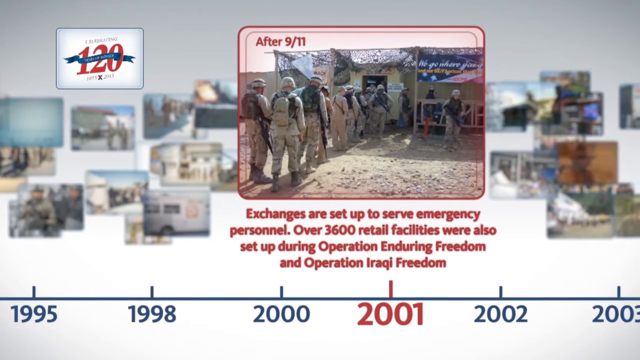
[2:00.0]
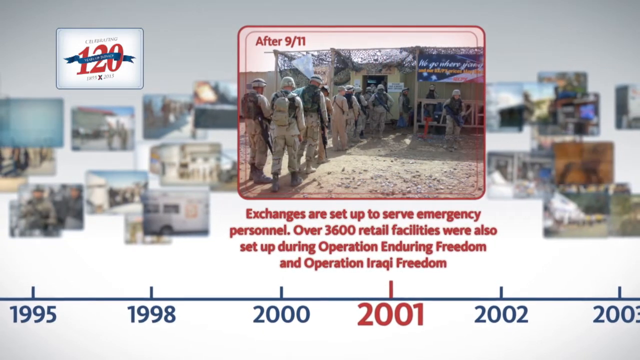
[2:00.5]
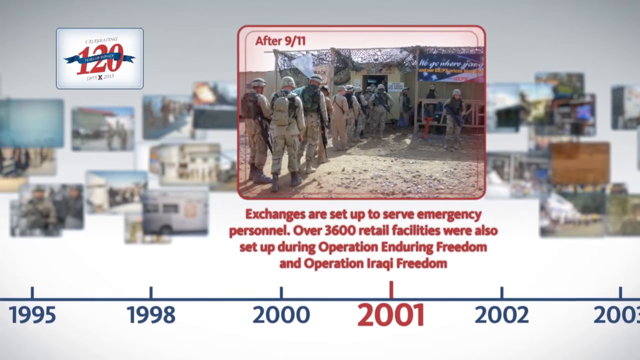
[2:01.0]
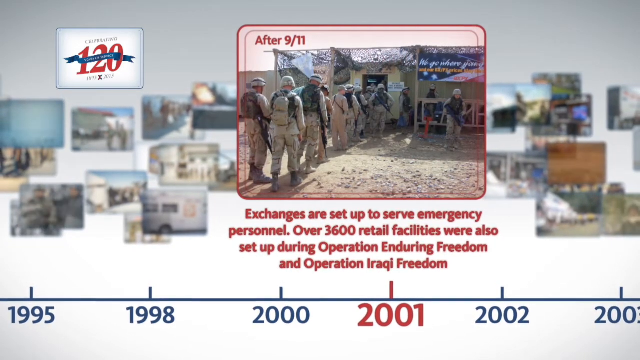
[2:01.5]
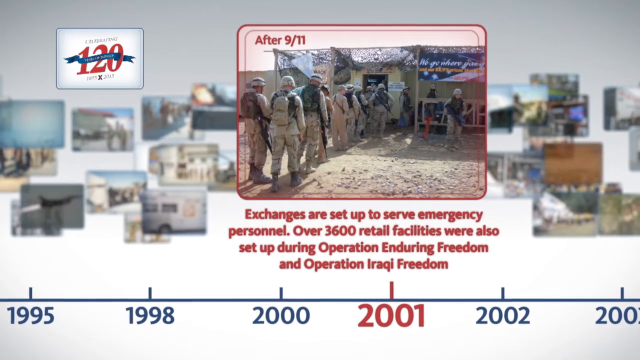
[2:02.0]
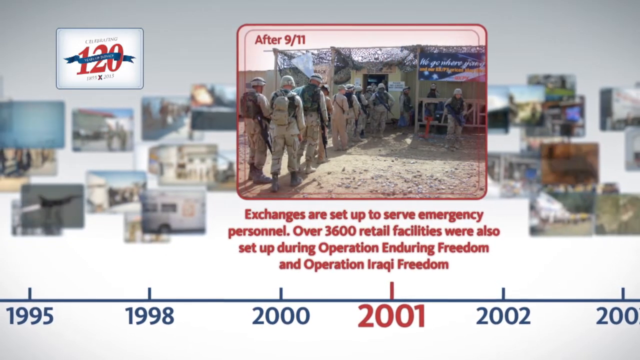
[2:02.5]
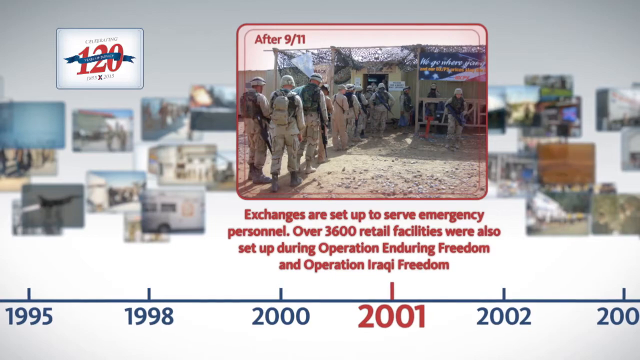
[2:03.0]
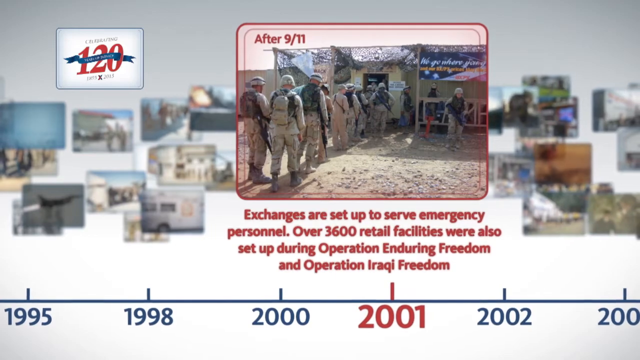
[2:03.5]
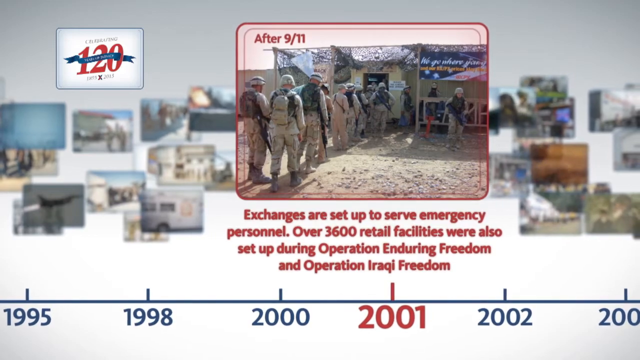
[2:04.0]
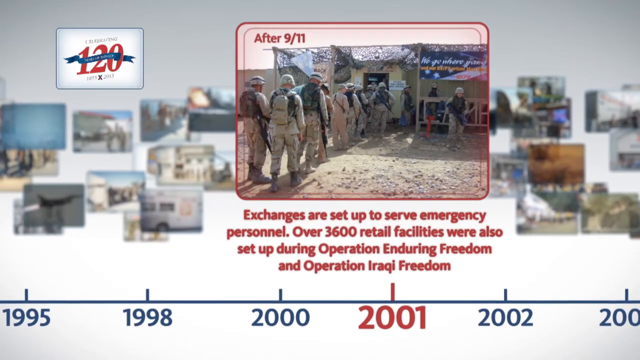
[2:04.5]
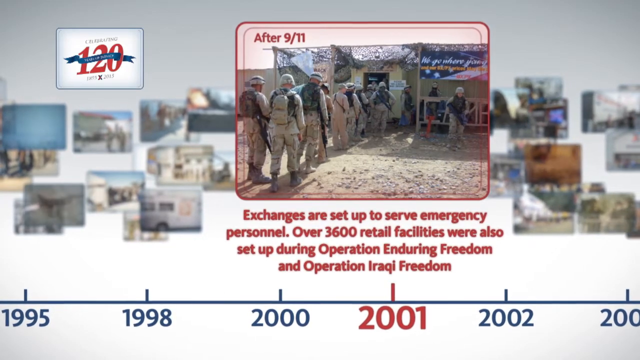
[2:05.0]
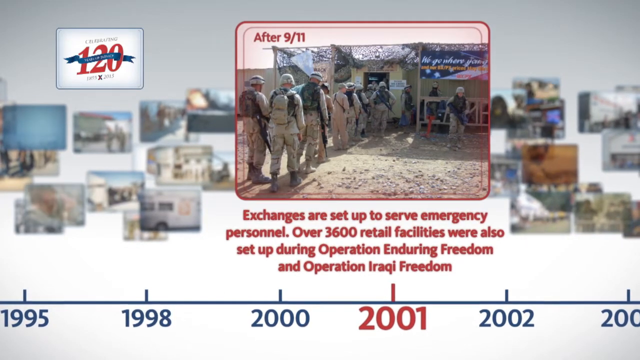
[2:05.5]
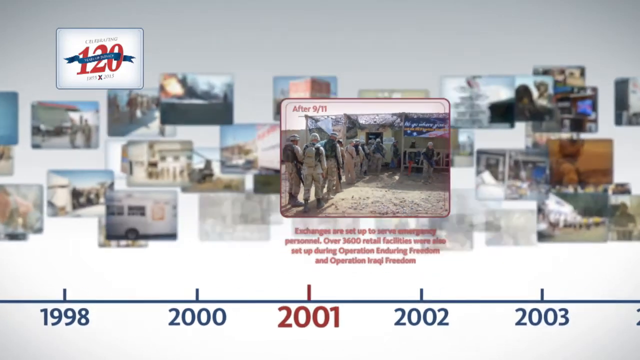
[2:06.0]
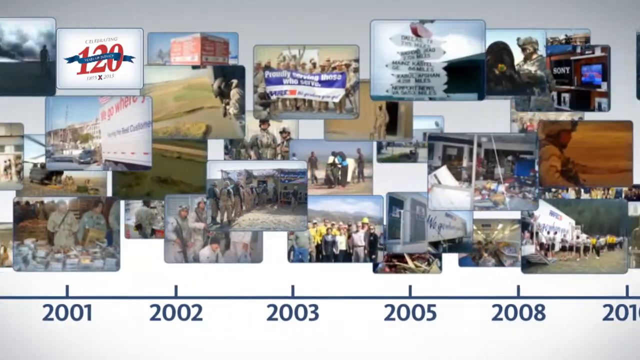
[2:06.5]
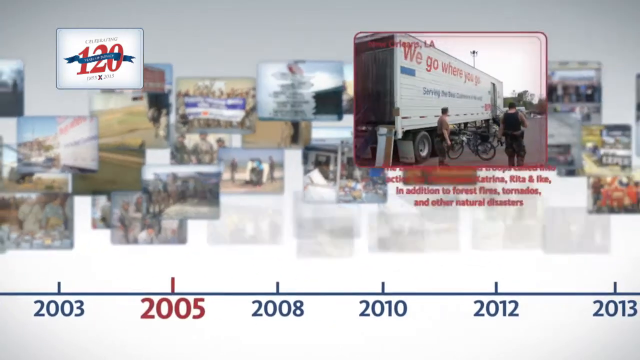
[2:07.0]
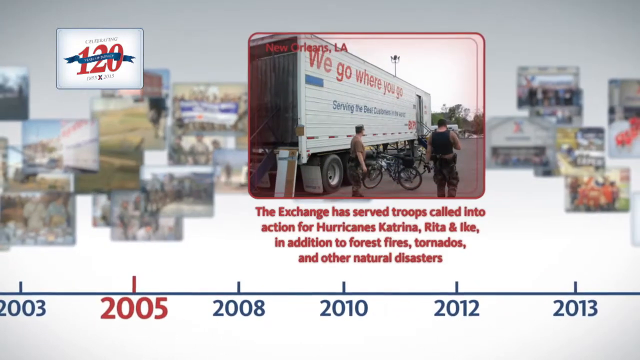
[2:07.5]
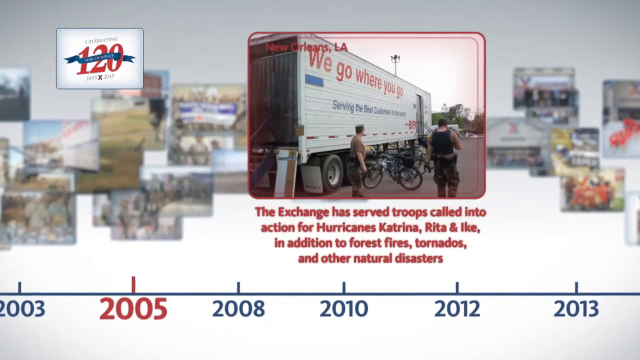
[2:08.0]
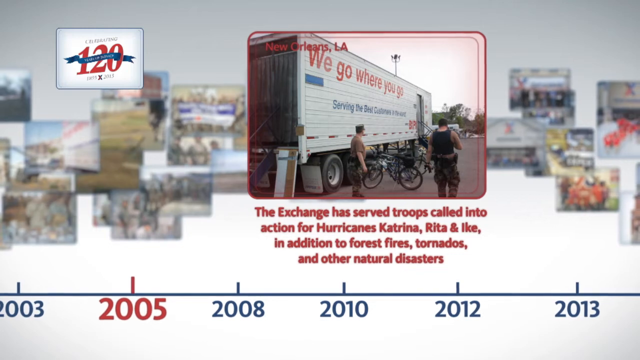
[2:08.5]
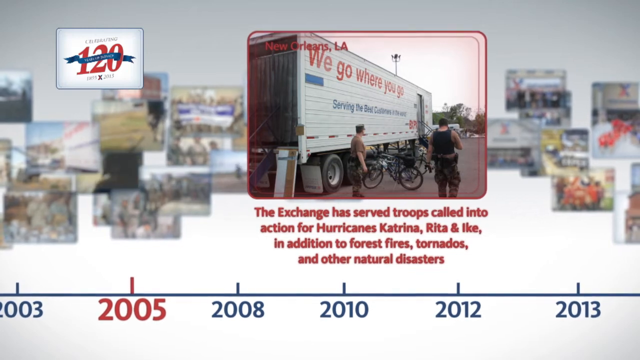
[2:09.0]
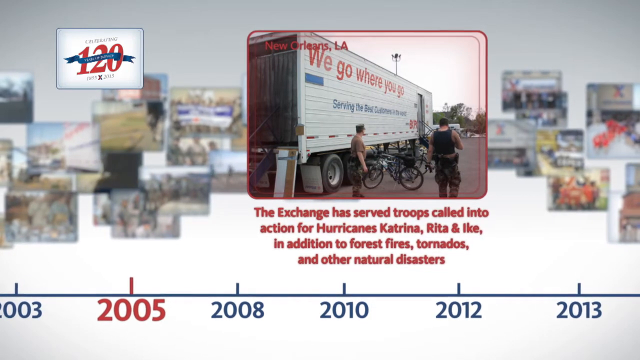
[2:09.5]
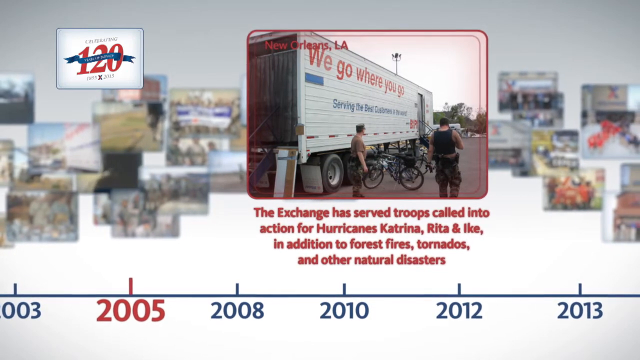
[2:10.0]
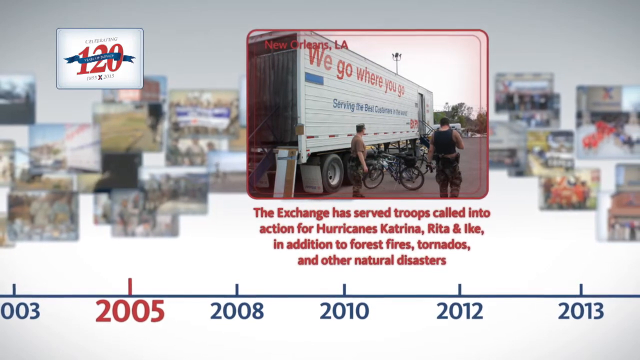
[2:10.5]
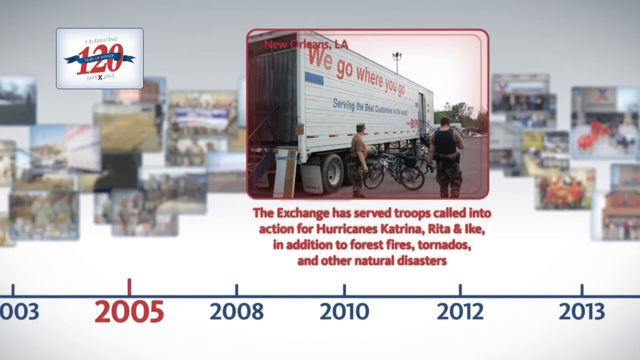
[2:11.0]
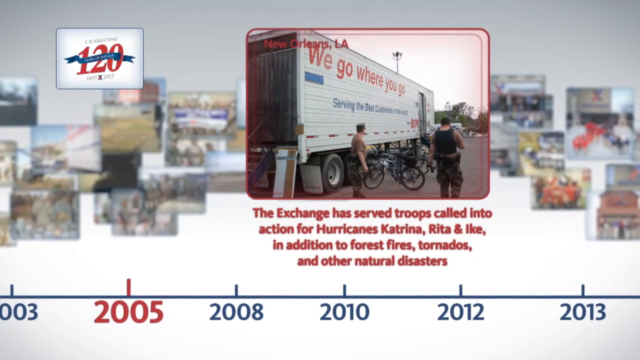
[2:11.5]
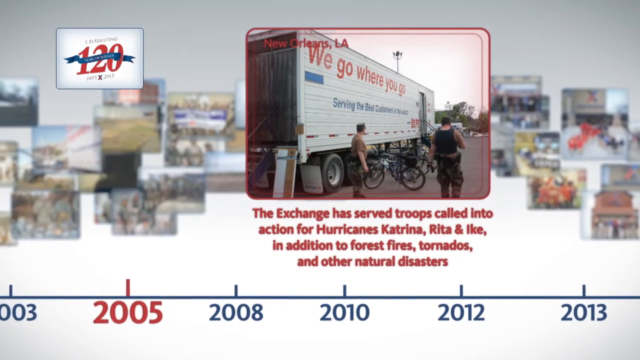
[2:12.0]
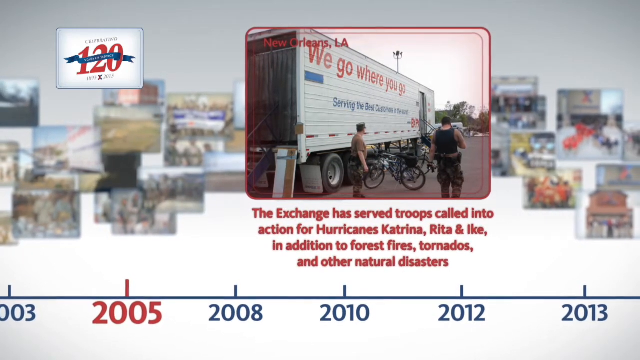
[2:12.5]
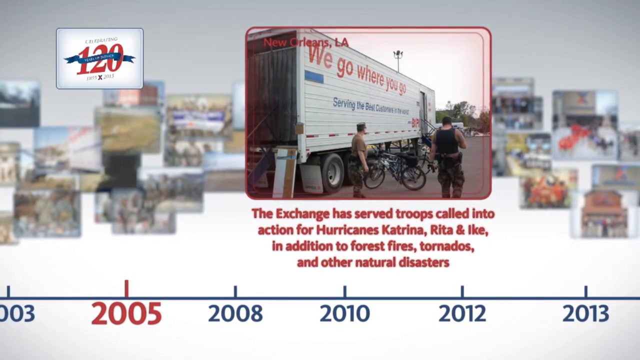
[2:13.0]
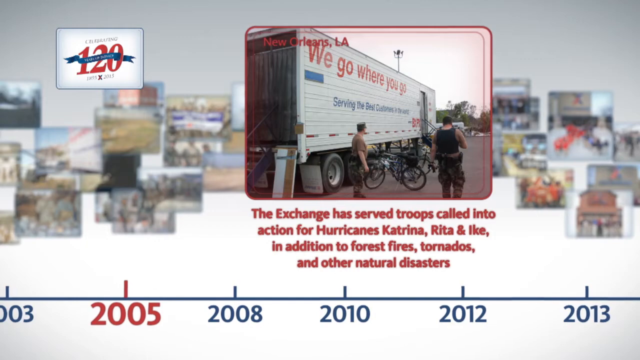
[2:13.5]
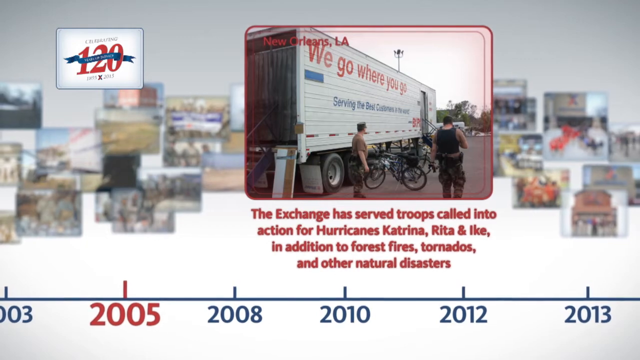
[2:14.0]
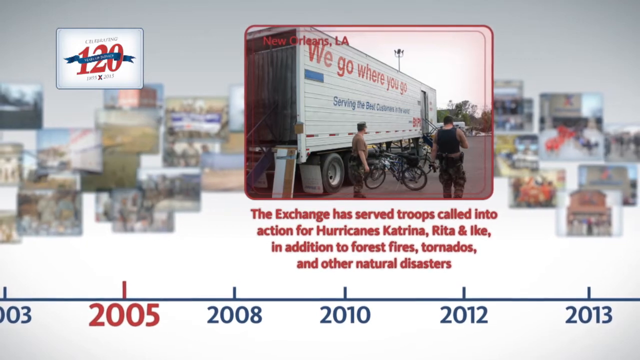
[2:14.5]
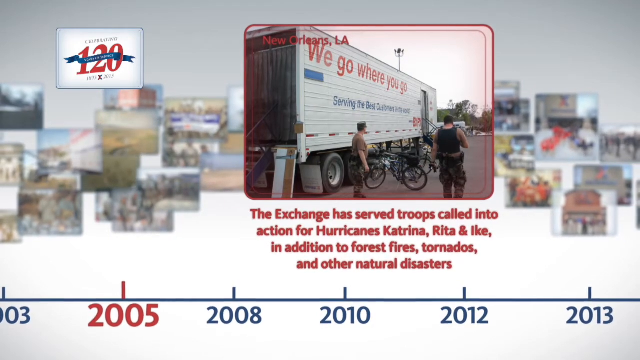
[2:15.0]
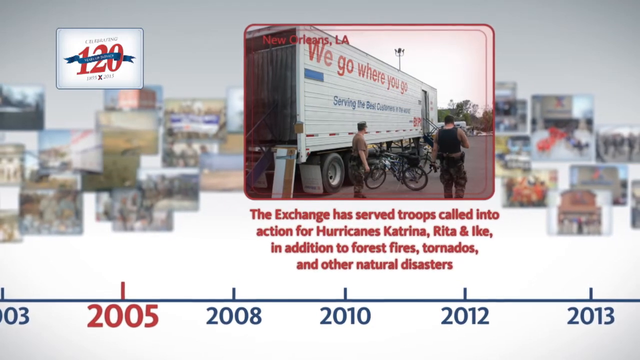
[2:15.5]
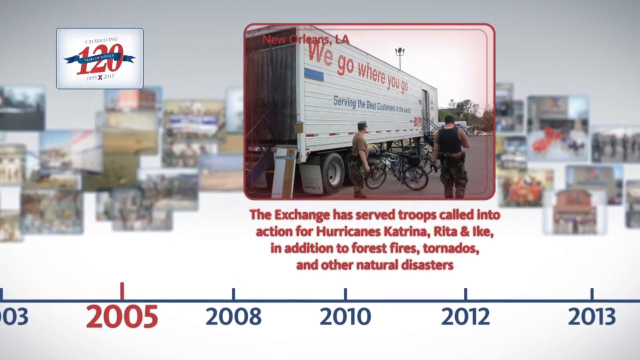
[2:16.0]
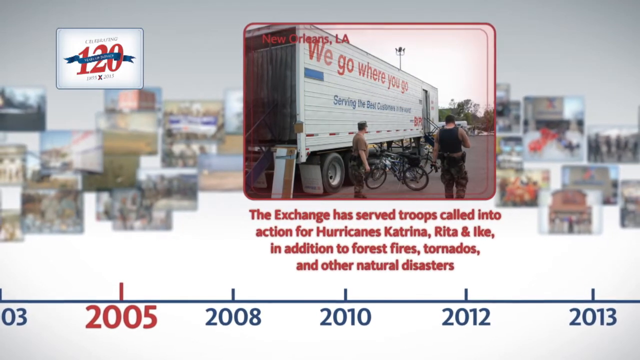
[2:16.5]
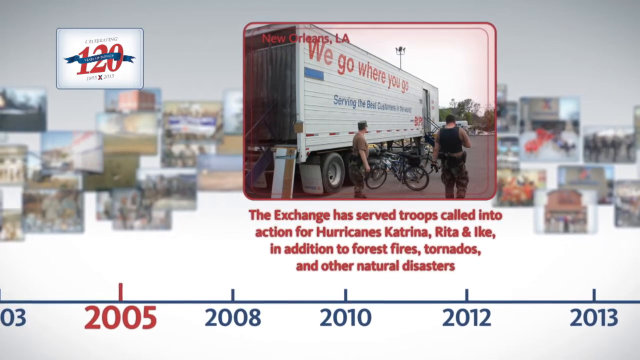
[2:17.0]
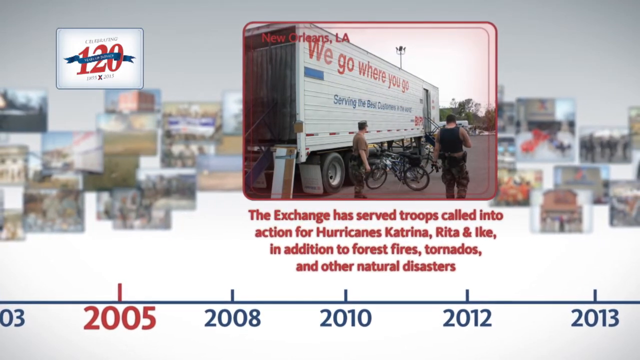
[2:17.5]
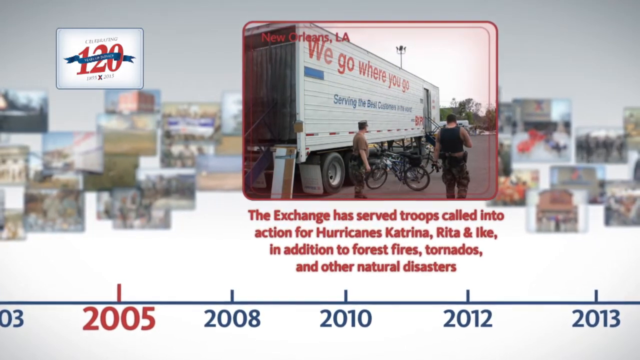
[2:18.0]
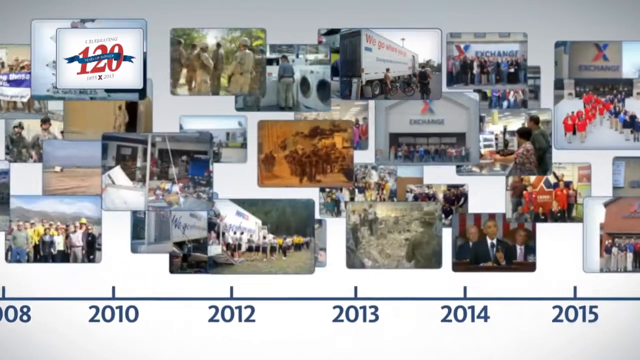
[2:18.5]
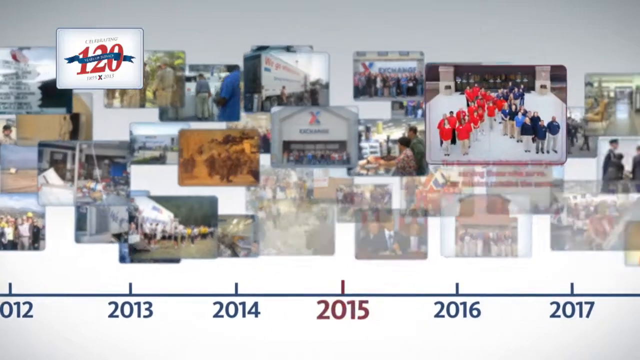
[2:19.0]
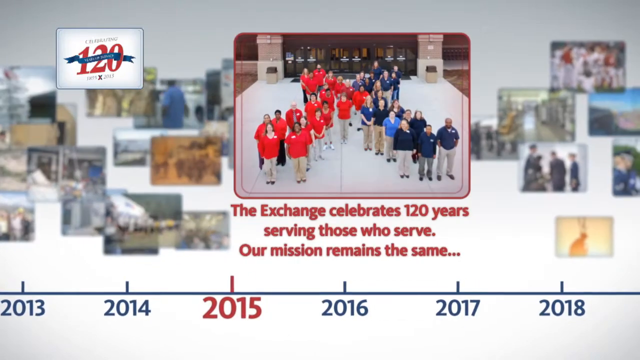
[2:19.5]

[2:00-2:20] Still in 2001, for the 3,600 retail facilities set up during Operation Enduring Freedom and Operation Iraqi Freedom, a color photograph shows soldiers lining up outside one of the exchanges in the Middle East. Text in its upper left corner says "after 9-11," and the details of 2001 are written below the photograph. The timeline then moves to 2005, when the exchange served troops called into action for Hurricanes Katrina, Rita and Ike and other natural disasters. A color photograph bordered in red has text in its upper left corner reading "New Orleans, Louisiana," showing the exchange supporting troops after Hurricane Katrina. In the background, other photos pan across the screen.